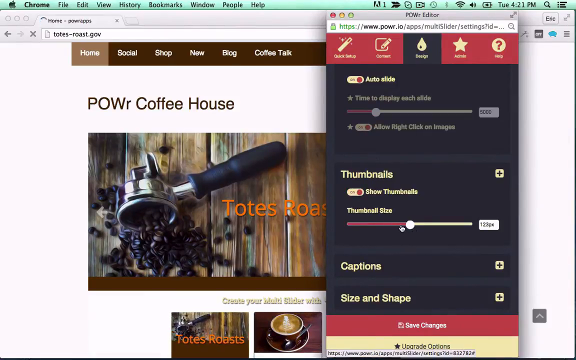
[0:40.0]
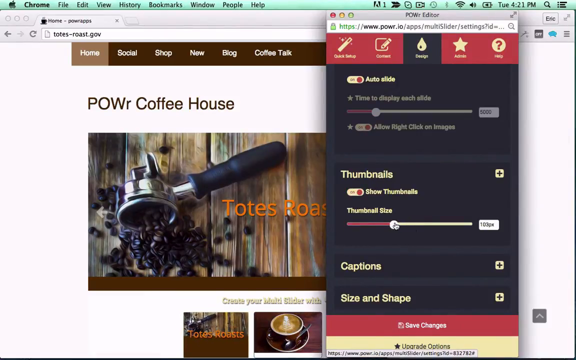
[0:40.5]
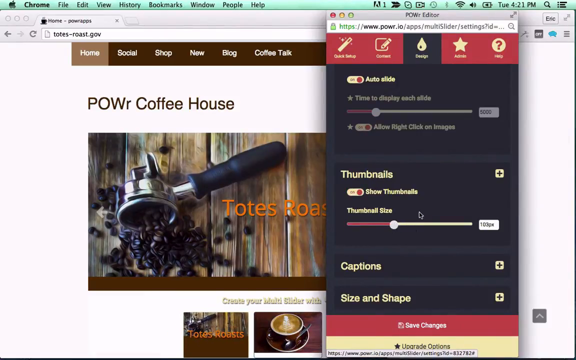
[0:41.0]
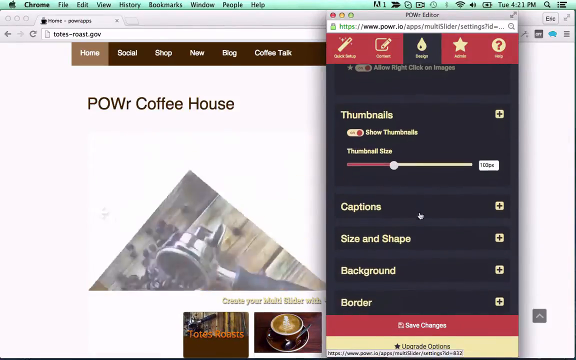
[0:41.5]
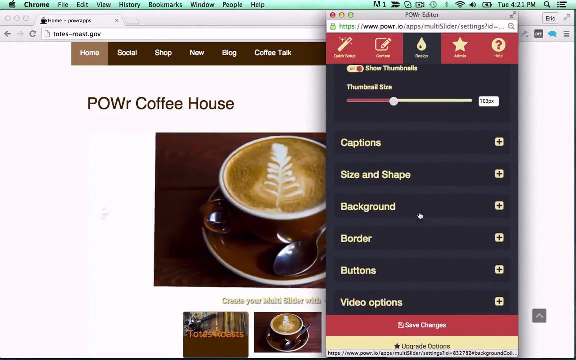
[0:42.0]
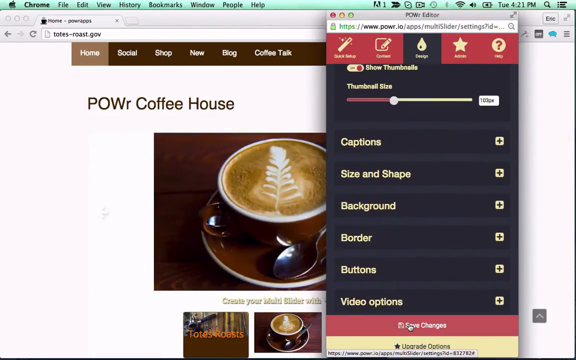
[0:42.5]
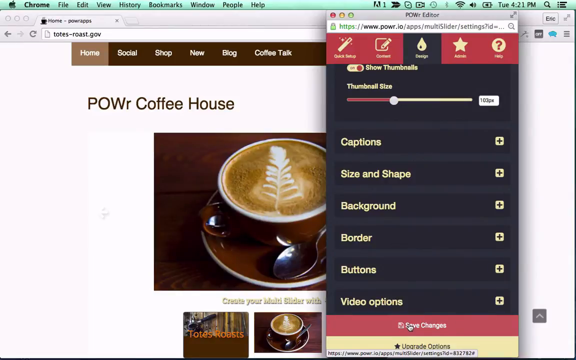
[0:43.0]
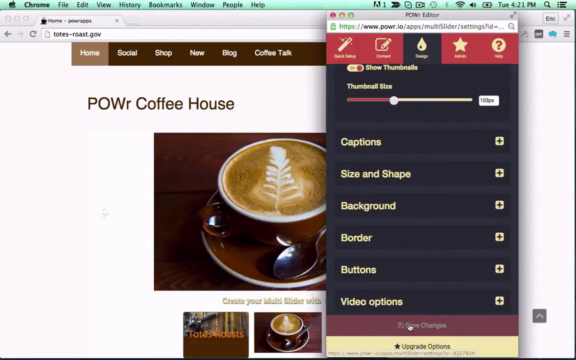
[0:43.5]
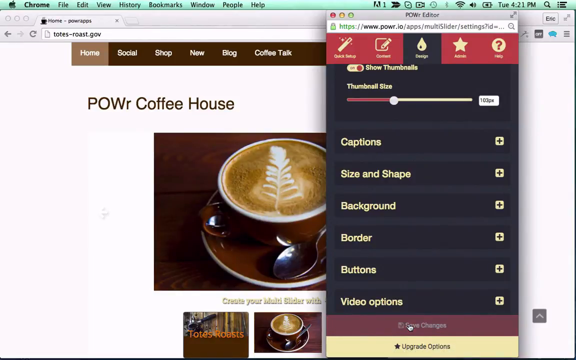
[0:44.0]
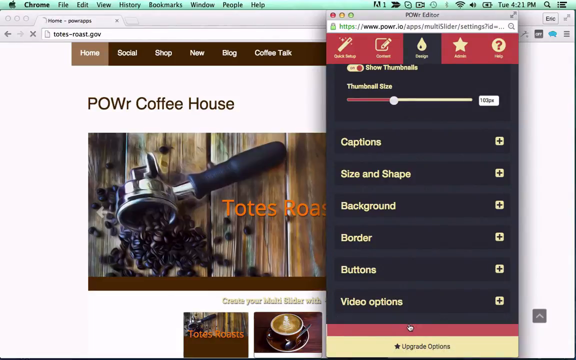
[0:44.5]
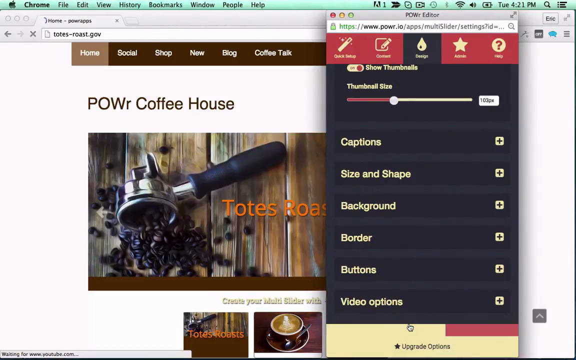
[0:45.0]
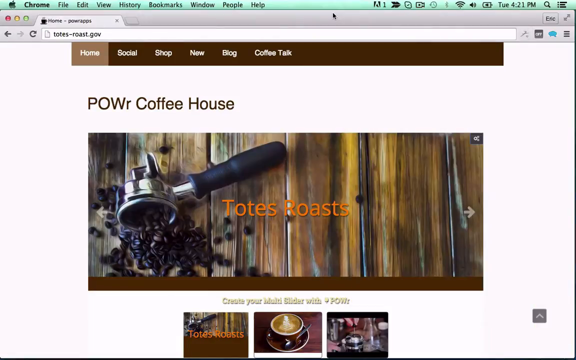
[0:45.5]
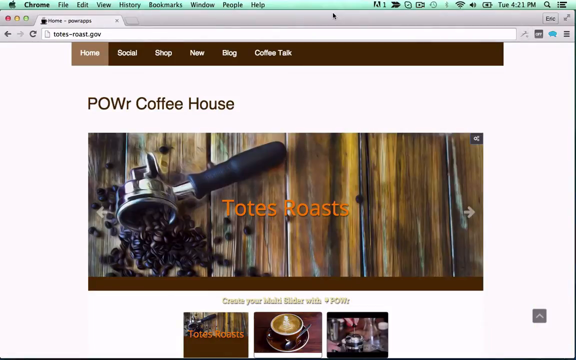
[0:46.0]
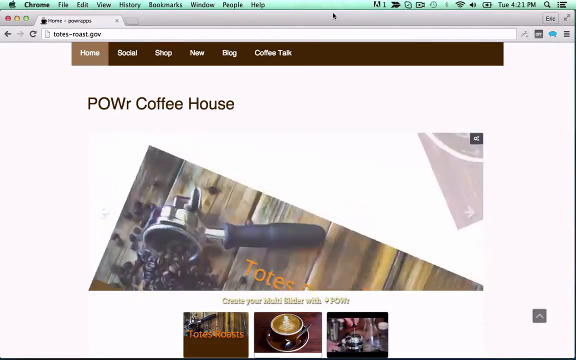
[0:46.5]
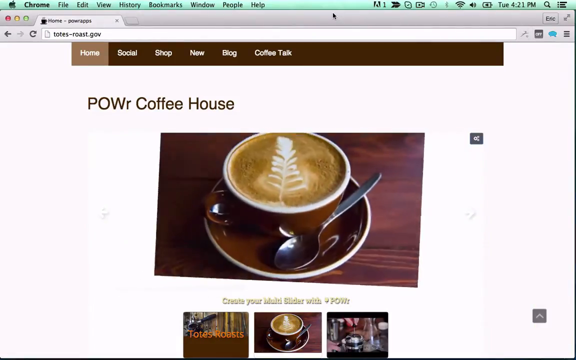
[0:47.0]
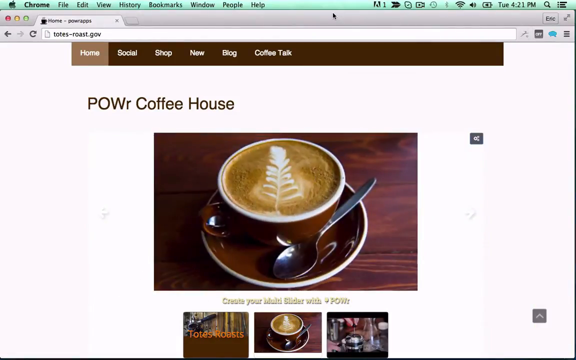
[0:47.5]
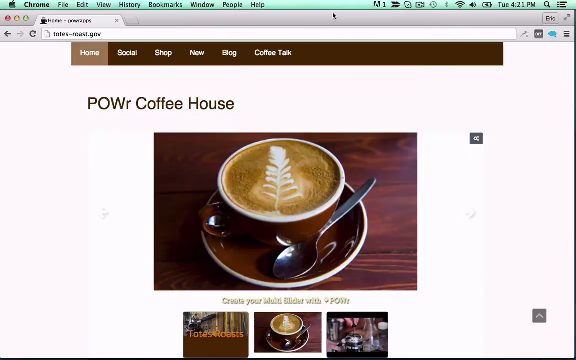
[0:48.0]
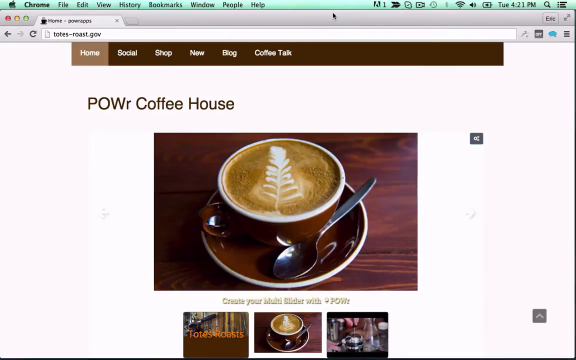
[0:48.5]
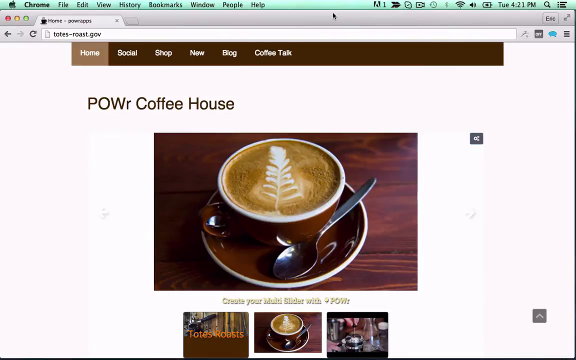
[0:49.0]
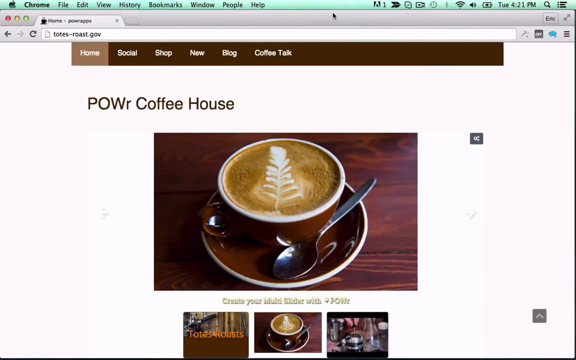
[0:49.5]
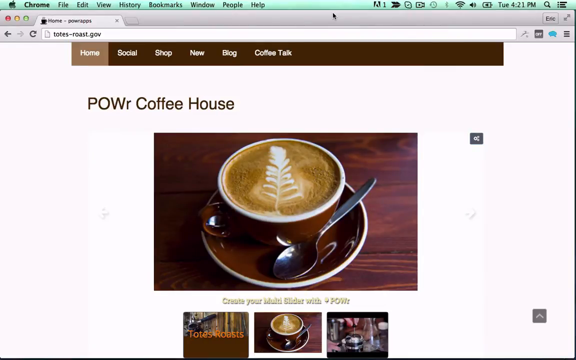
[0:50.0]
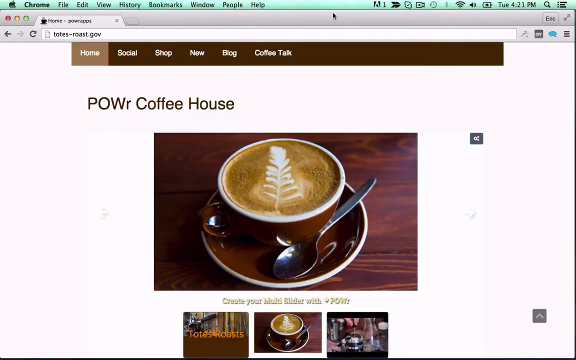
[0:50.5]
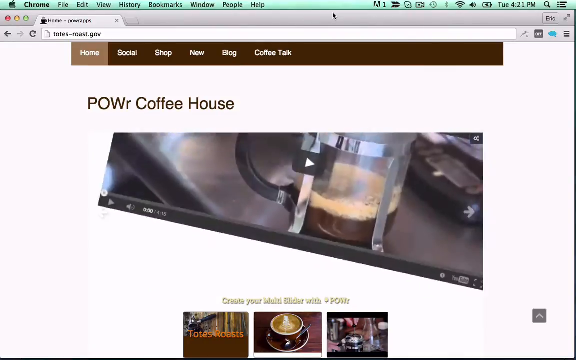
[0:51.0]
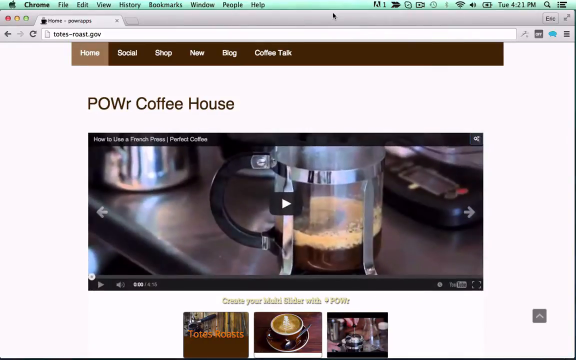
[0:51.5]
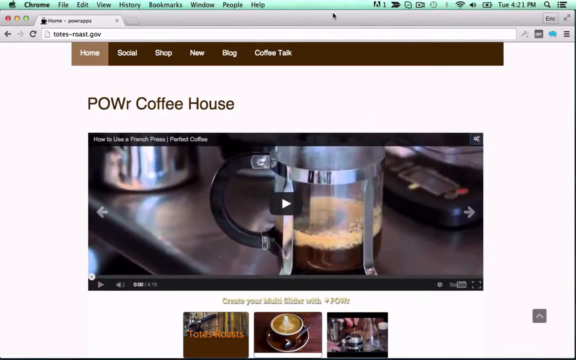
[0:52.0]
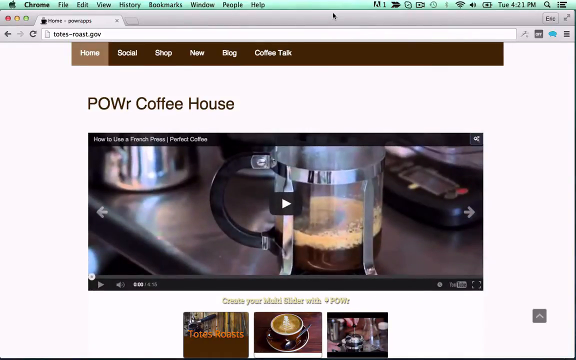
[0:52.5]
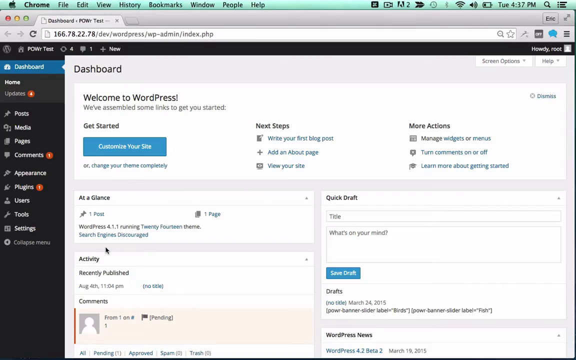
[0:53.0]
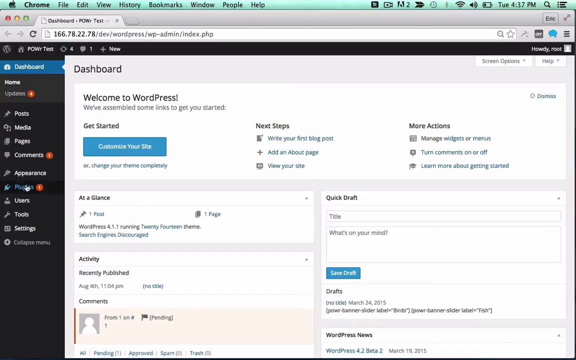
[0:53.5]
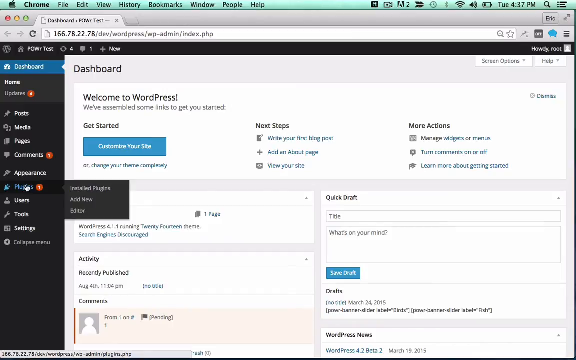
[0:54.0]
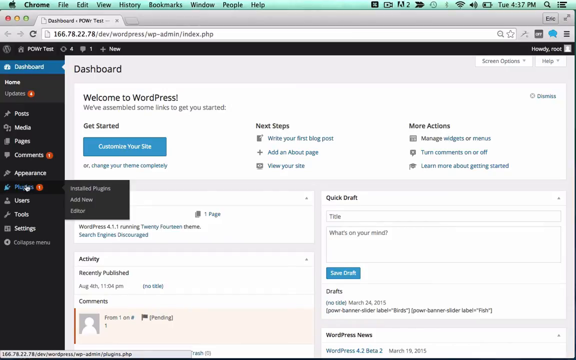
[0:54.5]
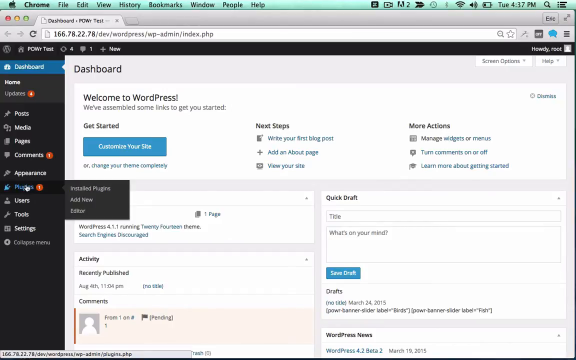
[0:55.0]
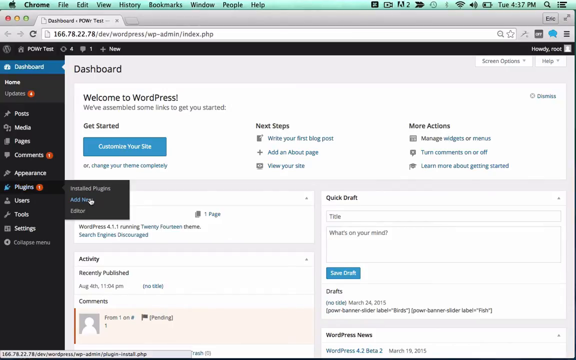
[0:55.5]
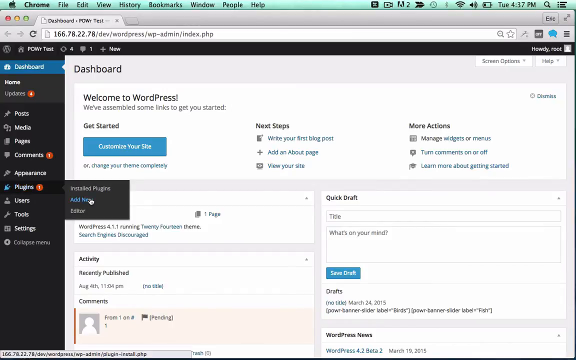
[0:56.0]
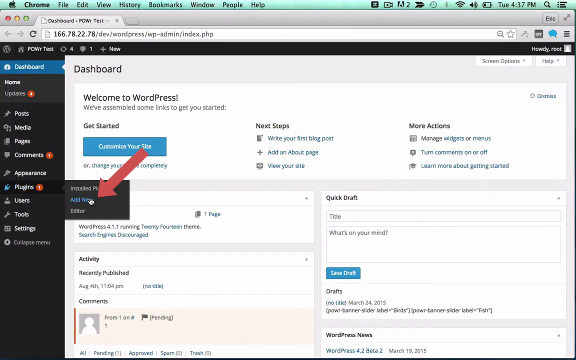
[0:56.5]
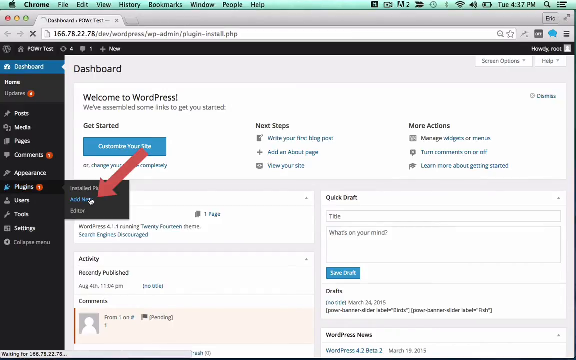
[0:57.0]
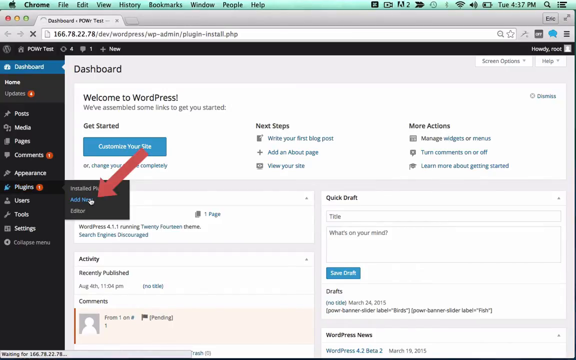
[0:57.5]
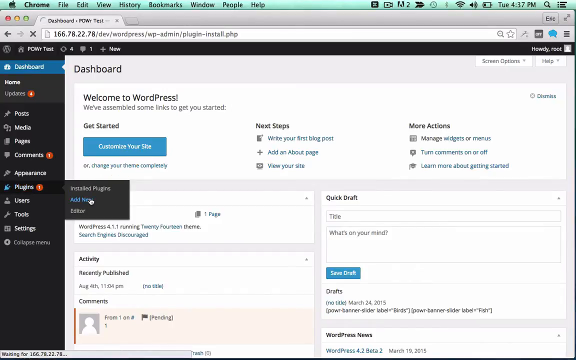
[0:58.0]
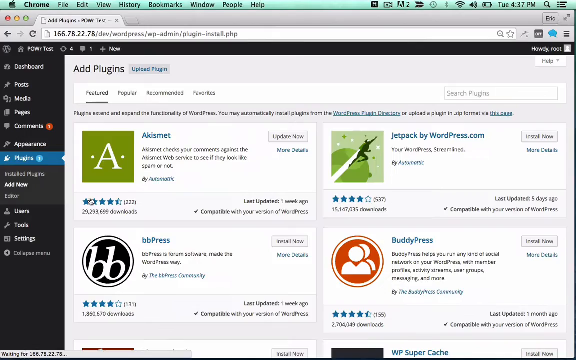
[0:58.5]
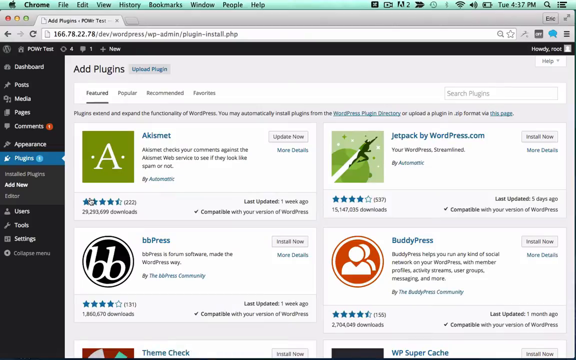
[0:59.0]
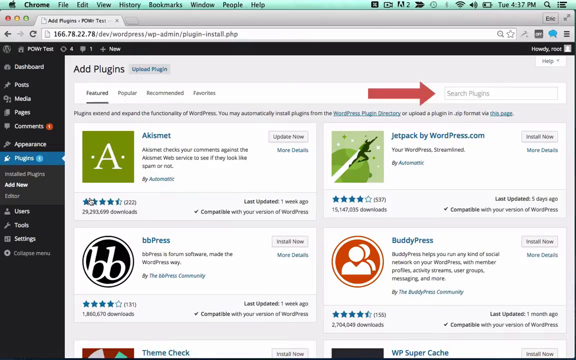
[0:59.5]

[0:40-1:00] The person adjusts the thumbnail size to be a bit smaller. When he closes the POWr editor, the slide in the background changes through the rotation, and when he clicks enter again another rotation follows. He then moves to another website, a dashboard for "power test", with a navigation menu on the left side that lists dashboard, posts, media, pages and comments; comments has a notification "1" in a red circle. From the dashboard he clicks on plugins, which has a red and white icon. Hovering over plugins reveals three more menu items, and he clicks add new while a big red arrow, added in editing, points to the add new button. Many plugins appear, with a search plugins bar on the right side, and another large red arrow added in editing points to that search bar.